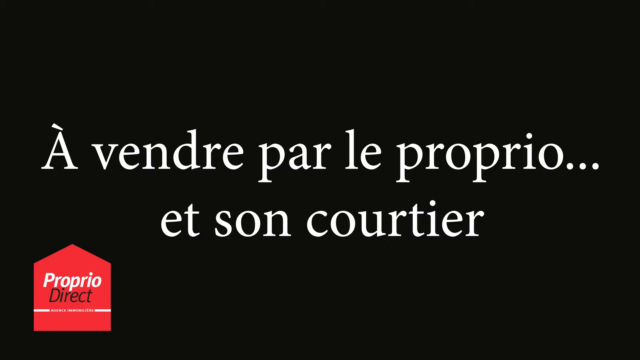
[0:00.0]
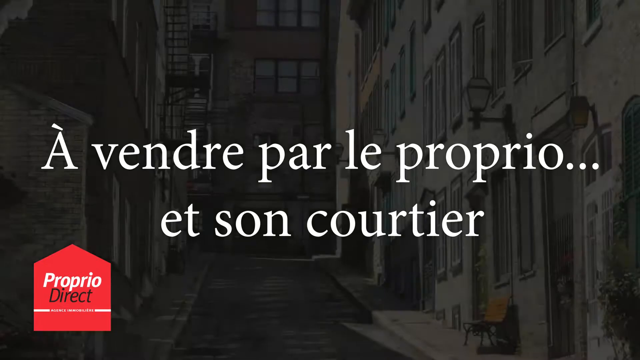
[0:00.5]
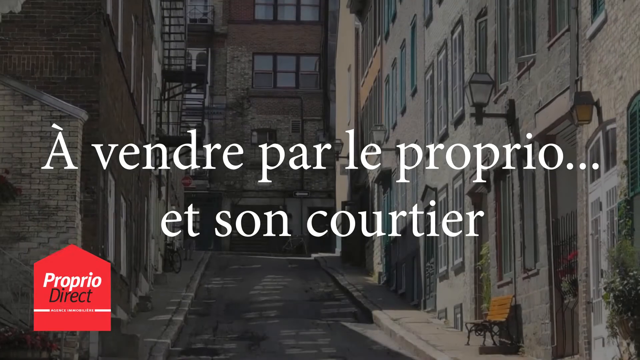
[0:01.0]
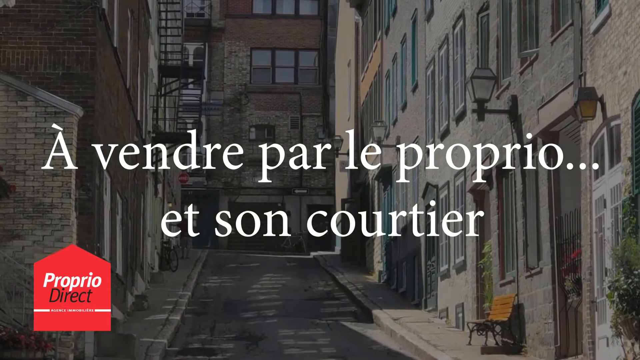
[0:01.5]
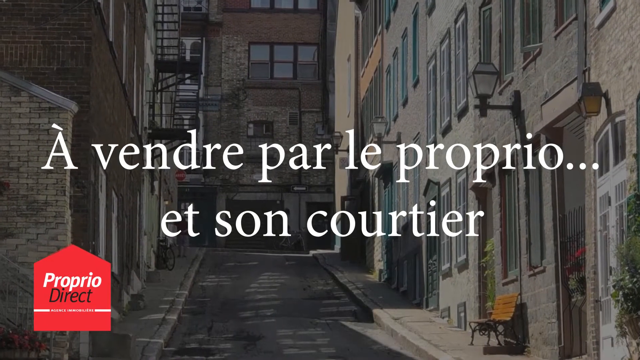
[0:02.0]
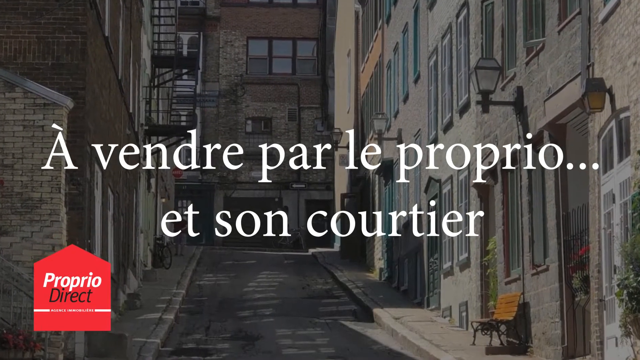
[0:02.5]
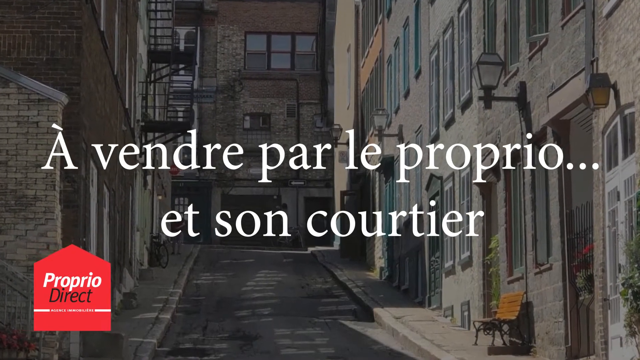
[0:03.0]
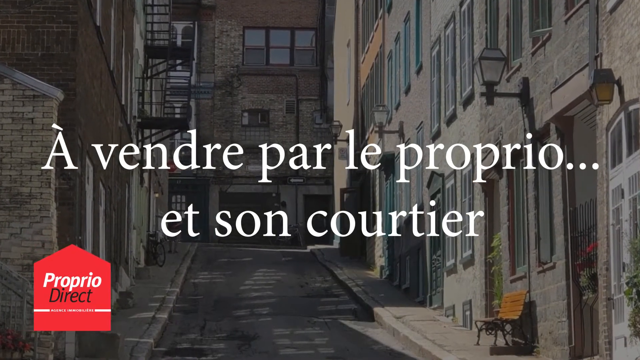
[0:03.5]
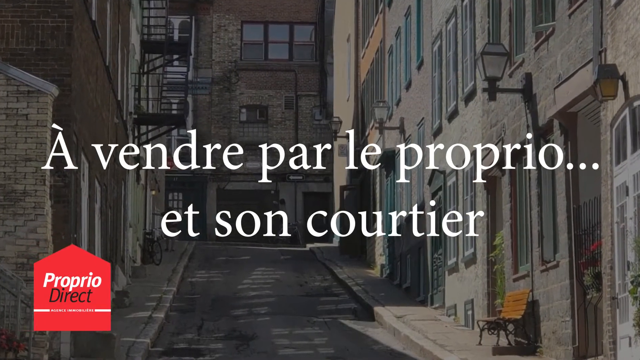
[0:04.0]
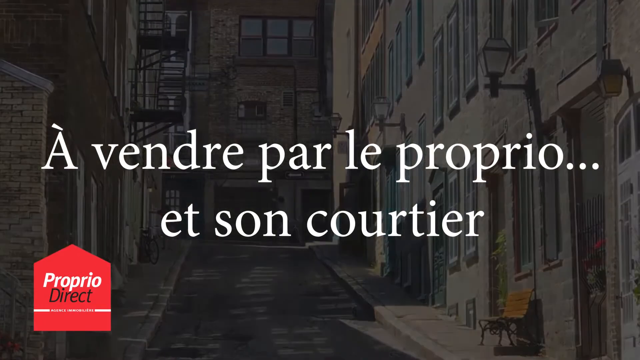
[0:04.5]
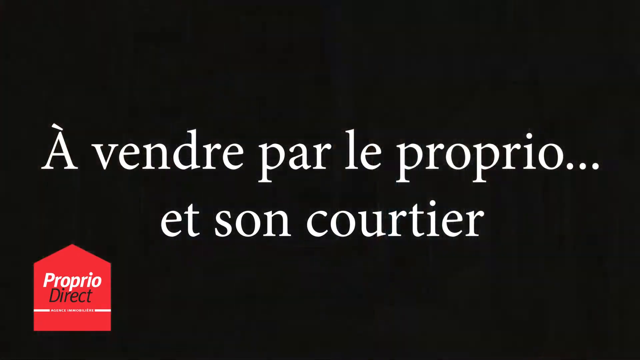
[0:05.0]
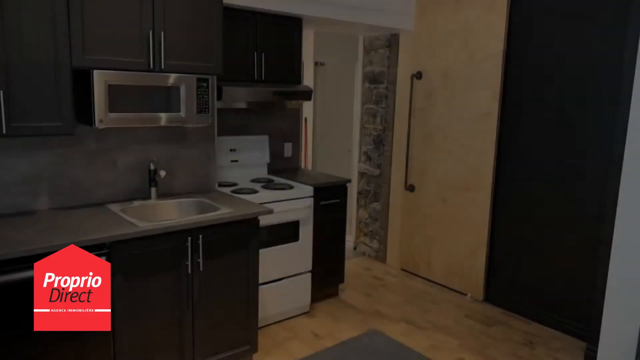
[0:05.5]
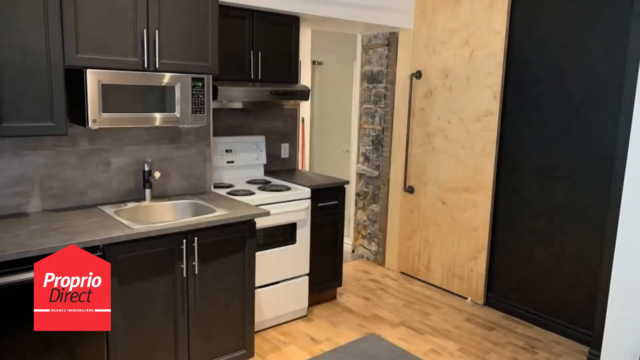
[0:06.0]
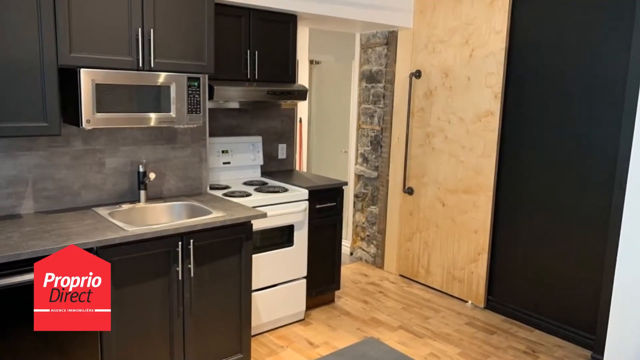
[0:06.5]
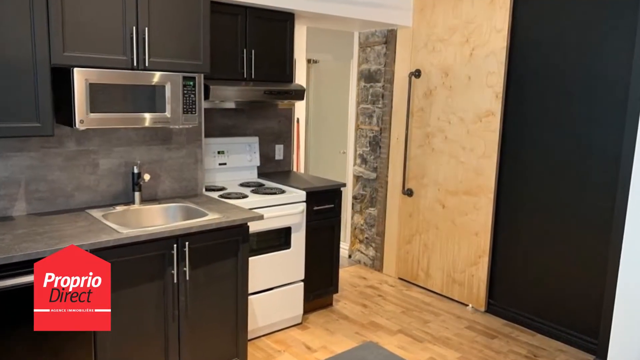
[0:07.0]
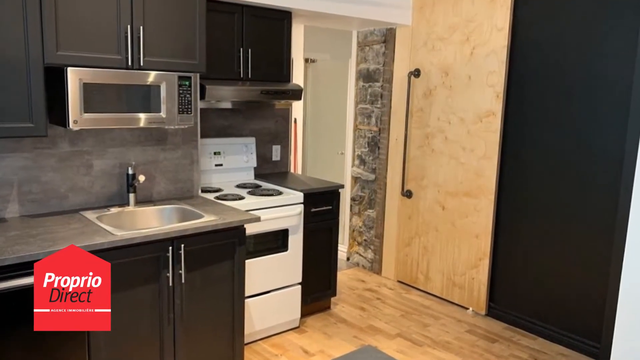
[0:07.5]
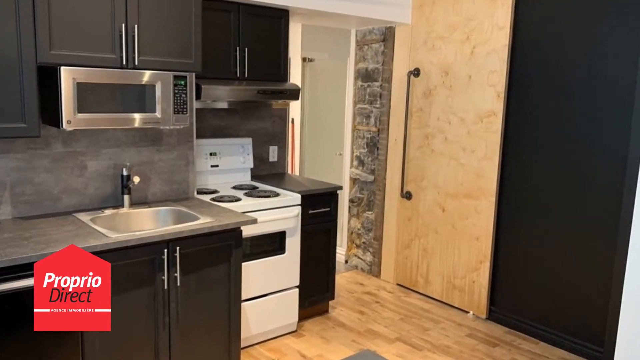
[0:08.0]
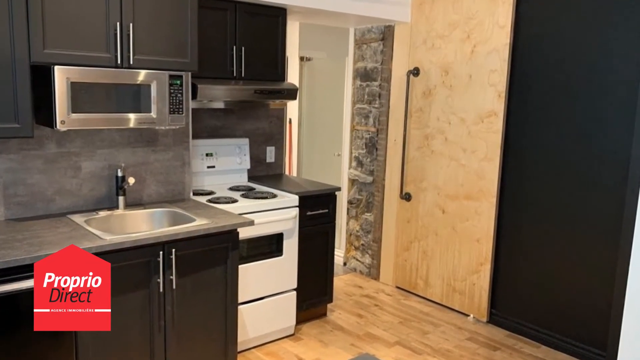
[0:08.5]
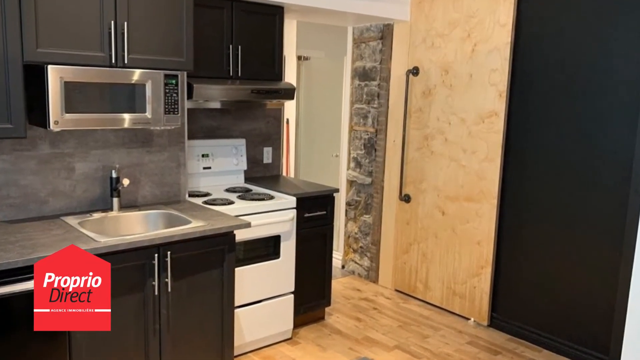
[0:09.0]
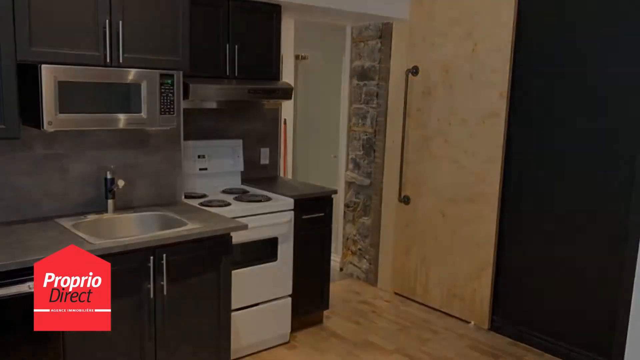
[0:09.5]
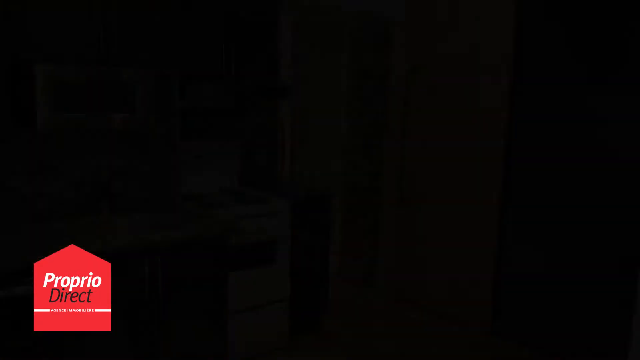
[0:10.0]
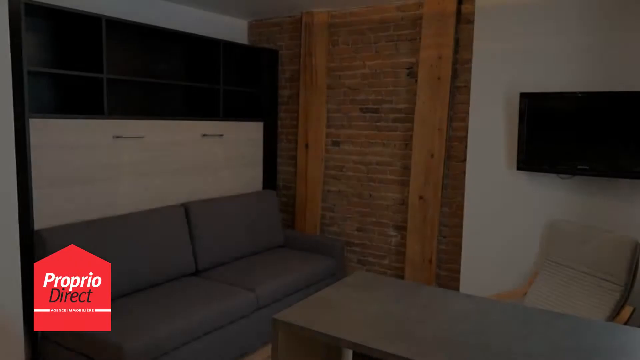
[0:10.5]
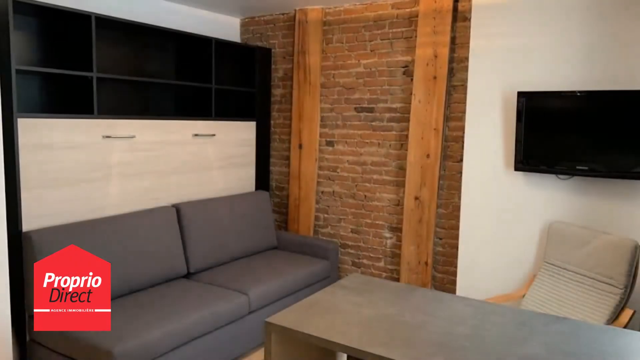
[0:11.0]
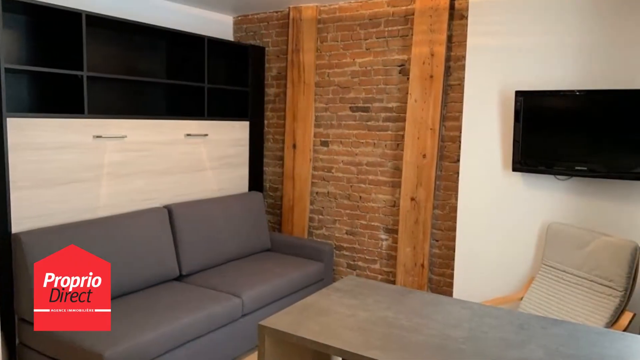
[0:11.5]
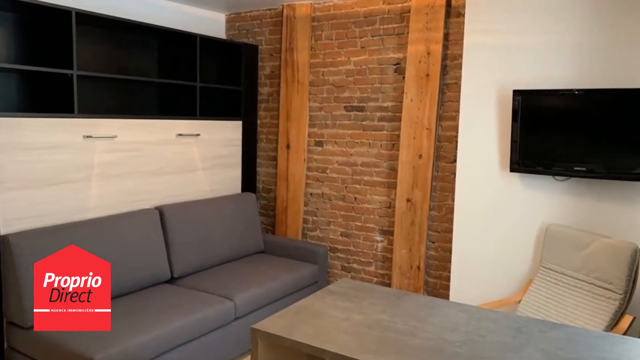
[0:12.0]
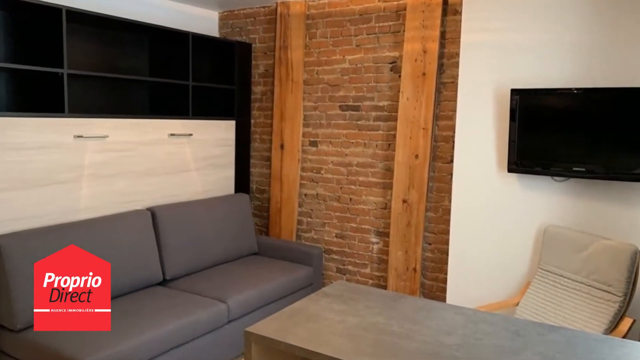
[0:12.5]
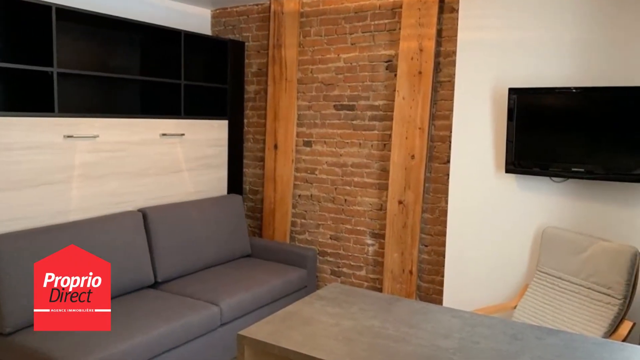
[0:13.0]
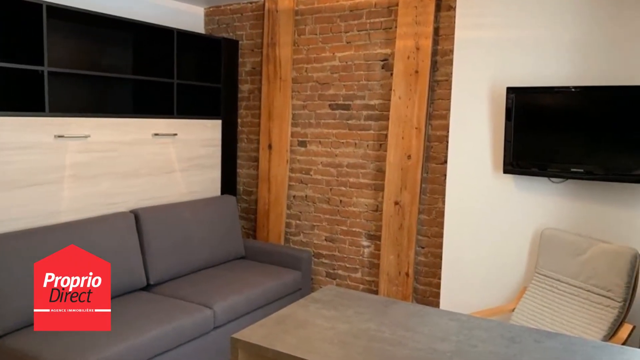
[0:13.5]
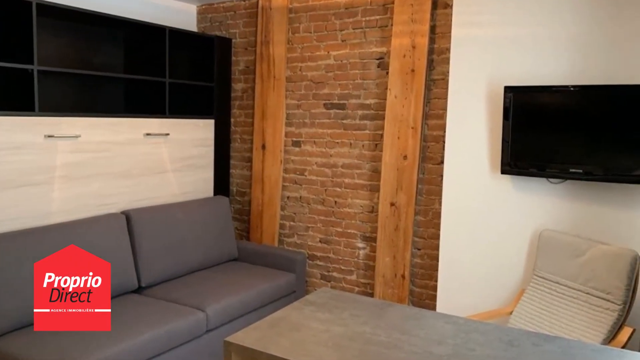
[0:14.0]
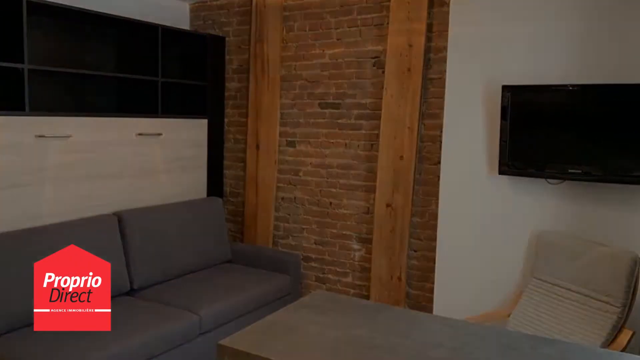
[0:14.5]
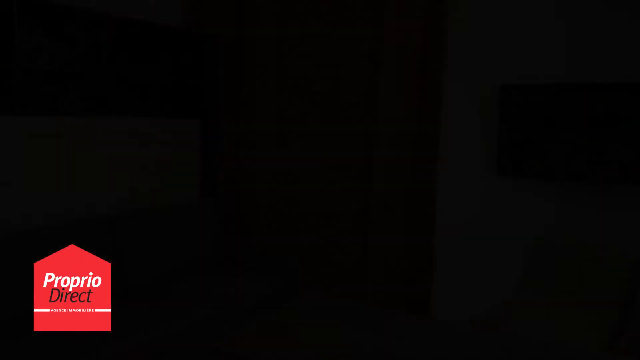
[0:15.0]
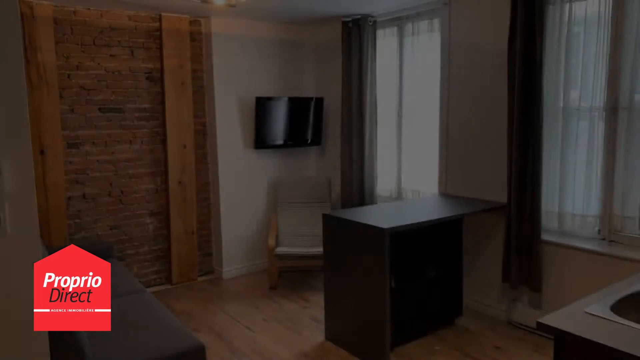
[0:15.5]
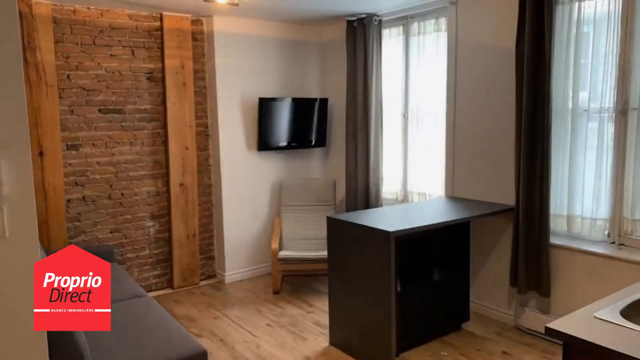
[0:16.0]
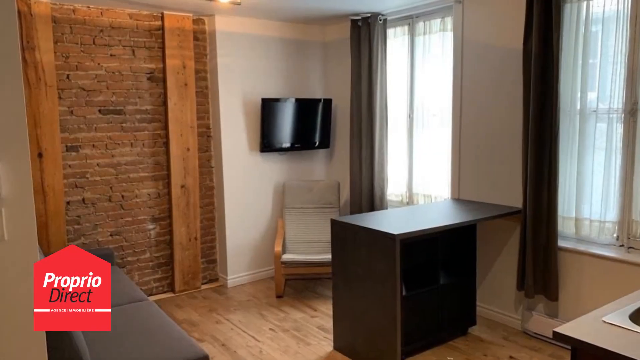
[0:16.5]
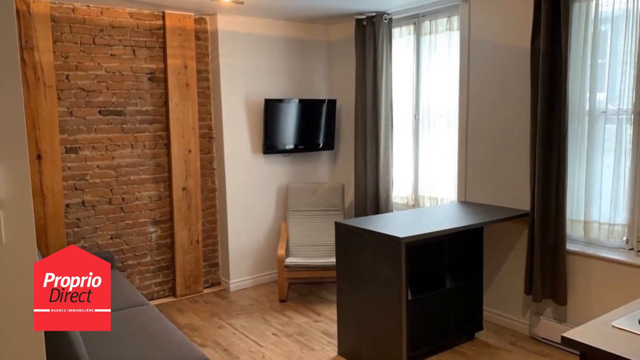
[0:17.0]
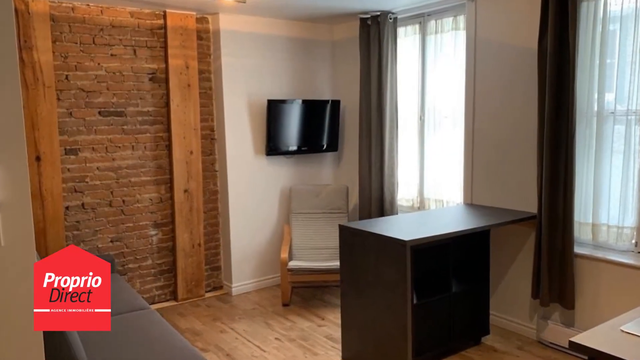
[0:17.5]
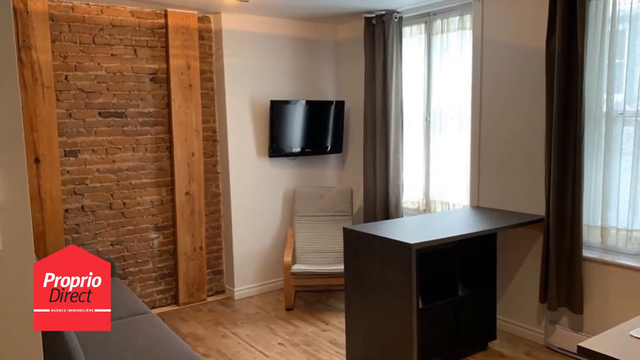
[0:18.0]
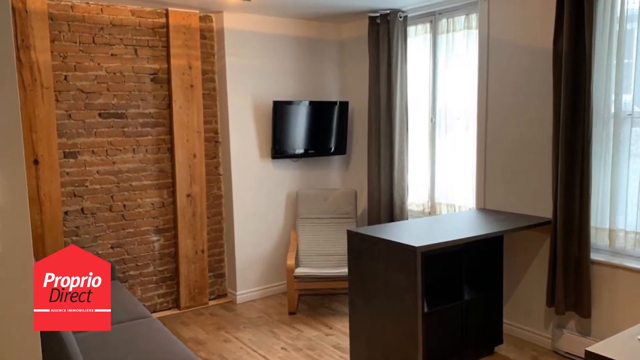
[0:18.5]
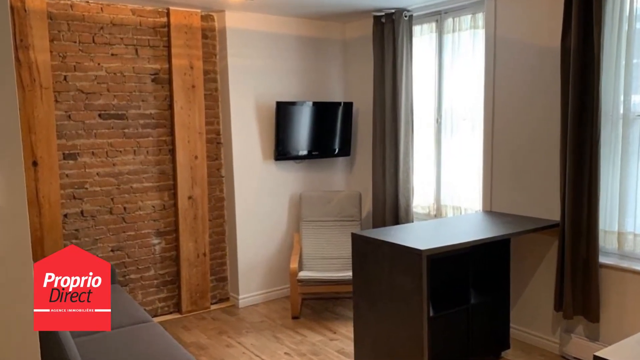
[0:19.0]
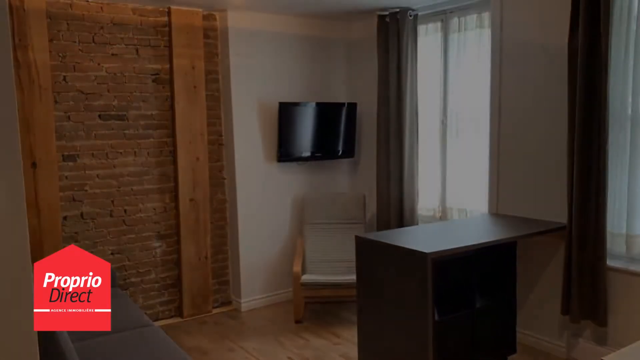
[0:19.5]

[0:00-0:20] The video opens with French writing on a black background that includes "proprio et son courtier," and a logo in the bottom left corner with "proprio direct" written on it. The image then shifts to a road in what looks like a suburb of a city, with various homes that appear to be townhouses. On the left there is an emergency ladder and a street lamp, and the road seems to be leaning at least a little. Next, the image shifts to the interior of a house, showing a kitchen with a sink, a microwave, an oven and a wooden door. It then shifts to a bedroom or perhaps a living room, with a sofa, a brick wall with some wooden support, a black TV attached to the white wall, a small chair and a table. The image slowly shifts toward the right, then changes to another angle of the same room, with a TV, two windows at least partially covered by curtains, and a counter in the center of the room.